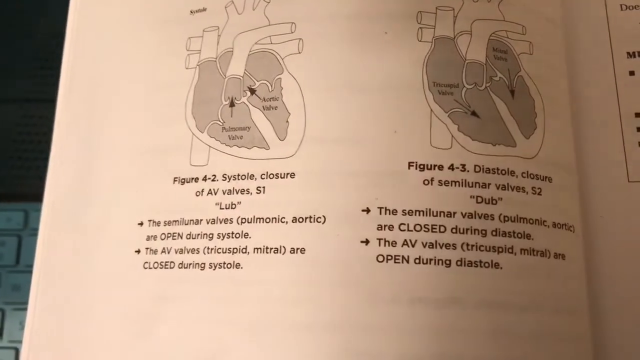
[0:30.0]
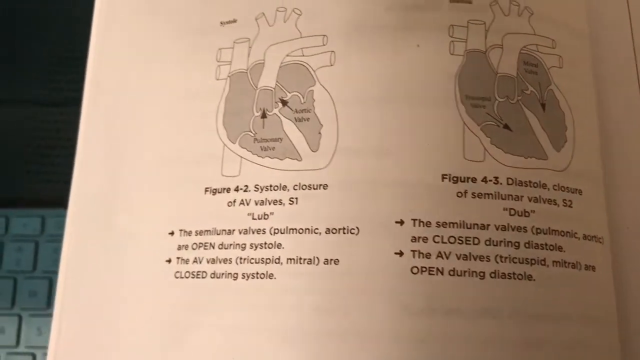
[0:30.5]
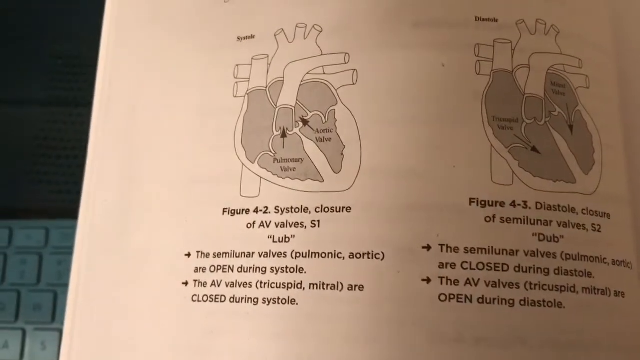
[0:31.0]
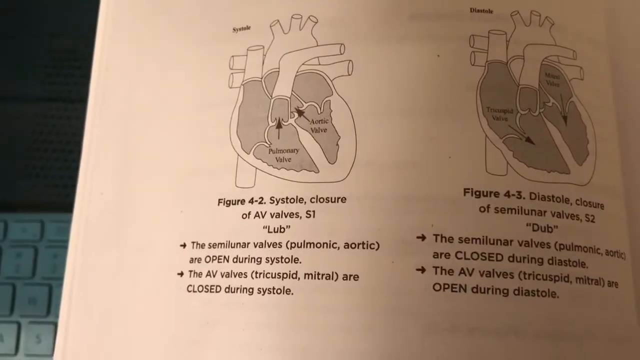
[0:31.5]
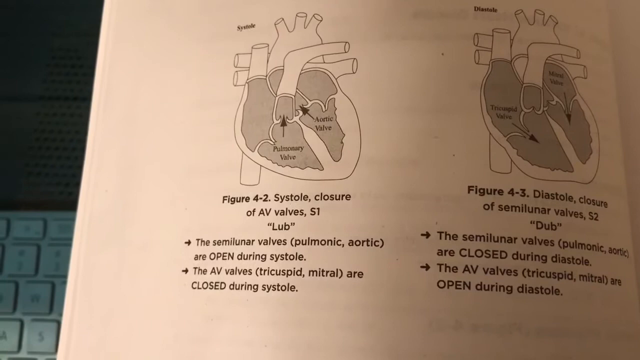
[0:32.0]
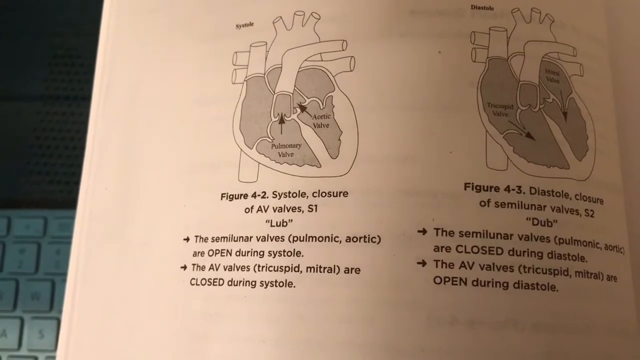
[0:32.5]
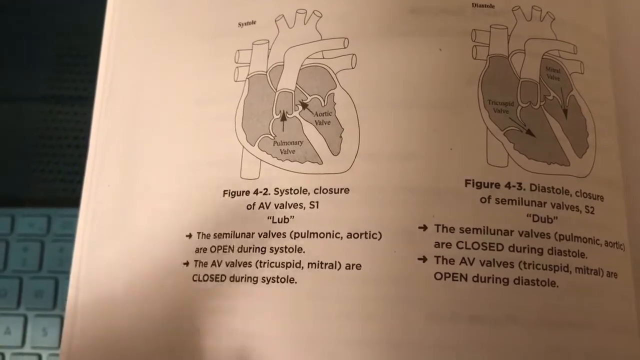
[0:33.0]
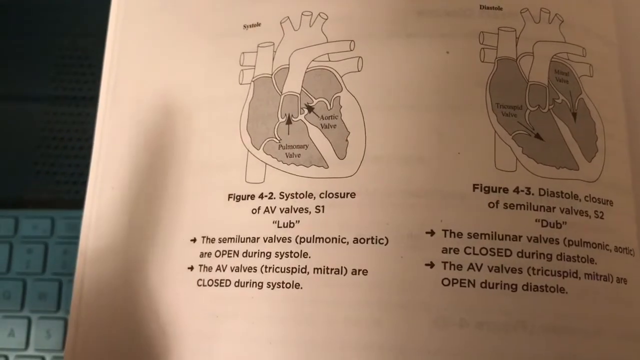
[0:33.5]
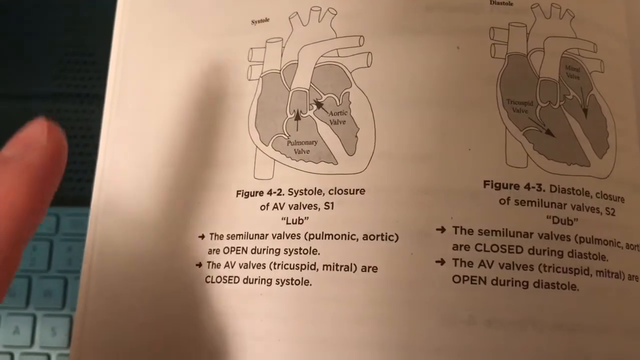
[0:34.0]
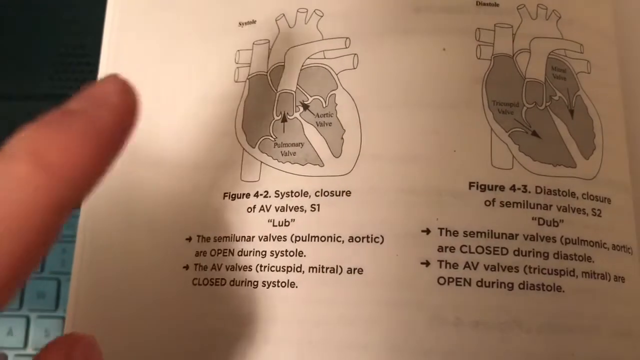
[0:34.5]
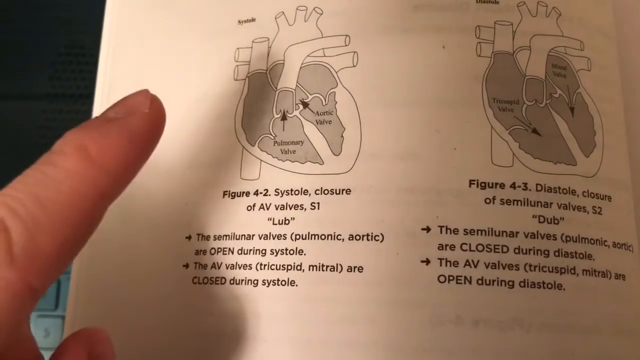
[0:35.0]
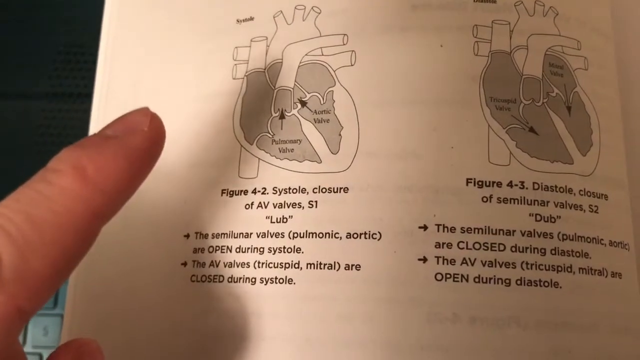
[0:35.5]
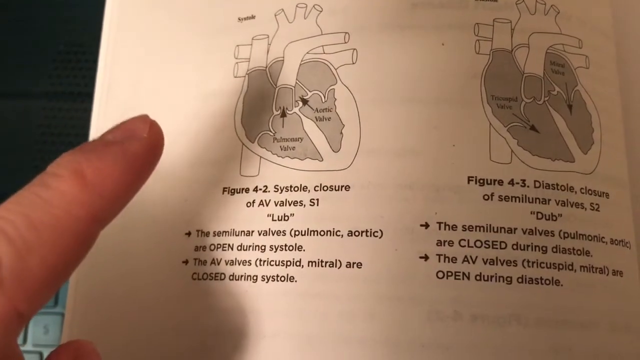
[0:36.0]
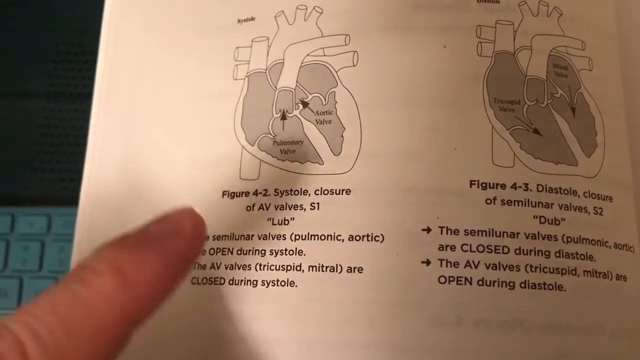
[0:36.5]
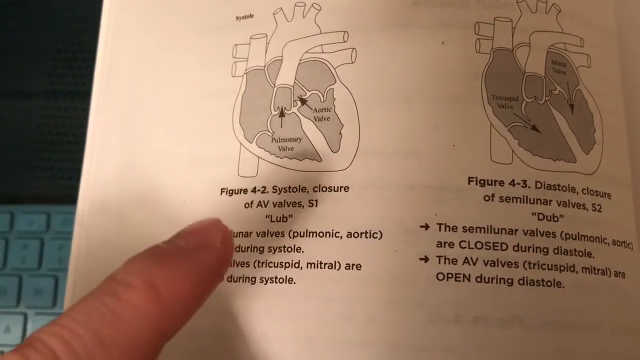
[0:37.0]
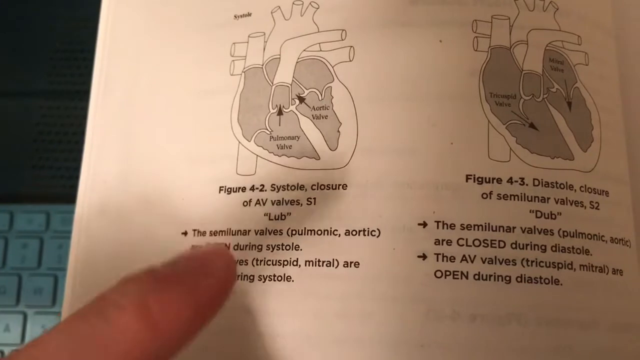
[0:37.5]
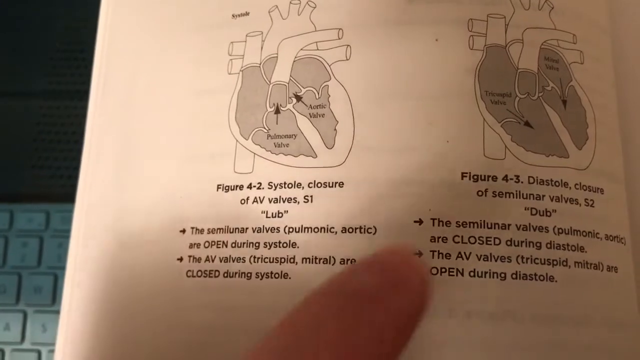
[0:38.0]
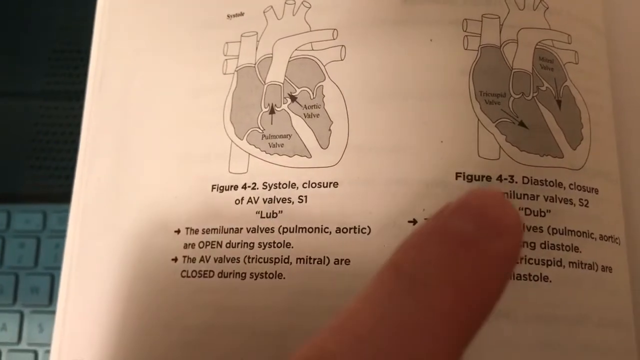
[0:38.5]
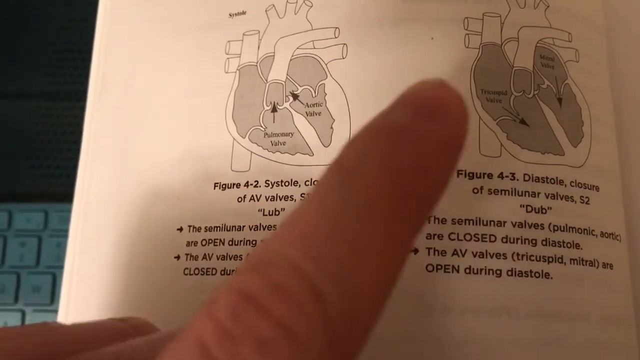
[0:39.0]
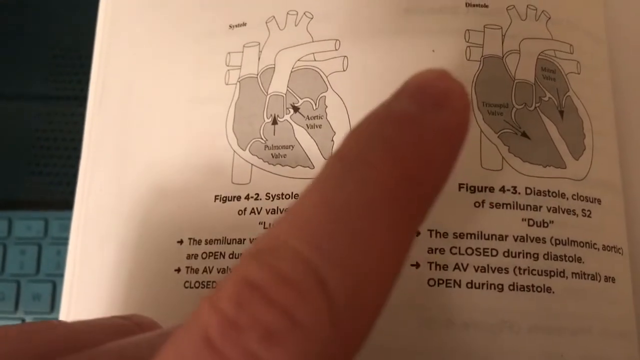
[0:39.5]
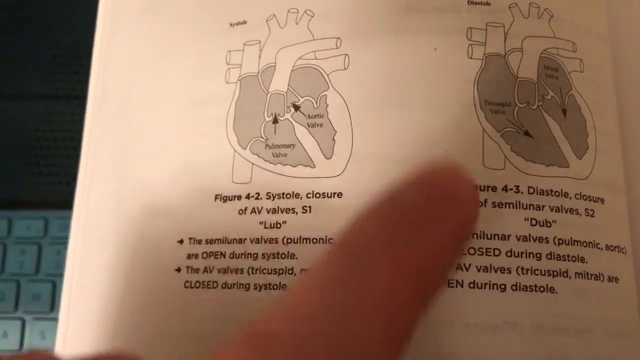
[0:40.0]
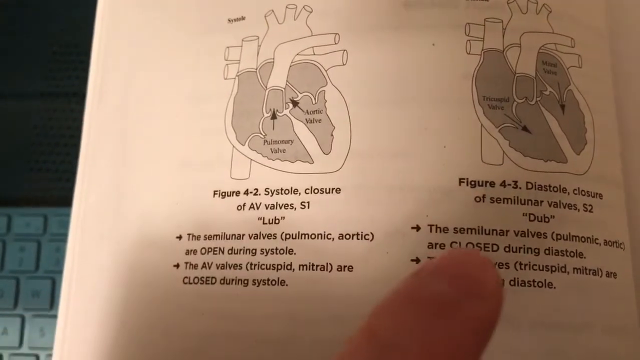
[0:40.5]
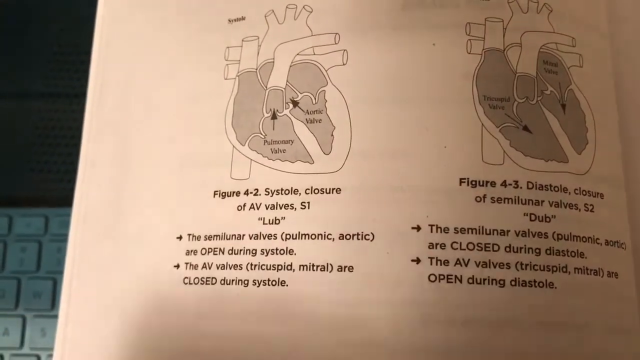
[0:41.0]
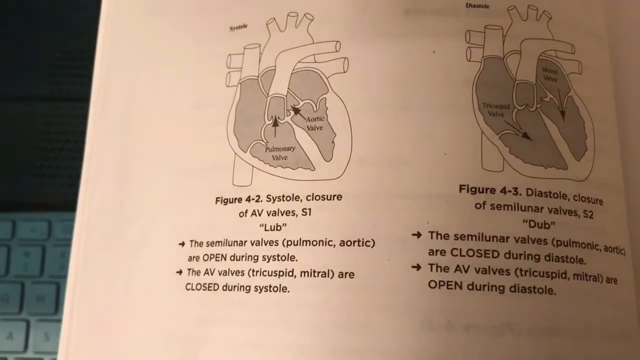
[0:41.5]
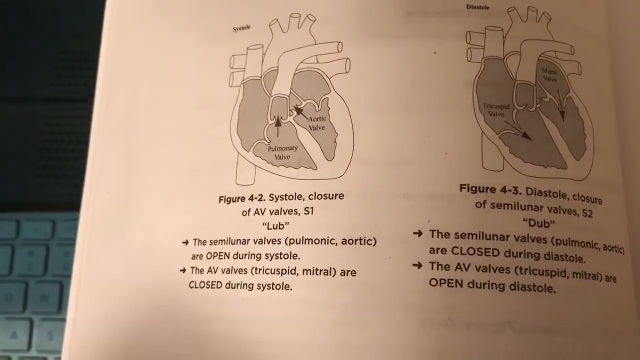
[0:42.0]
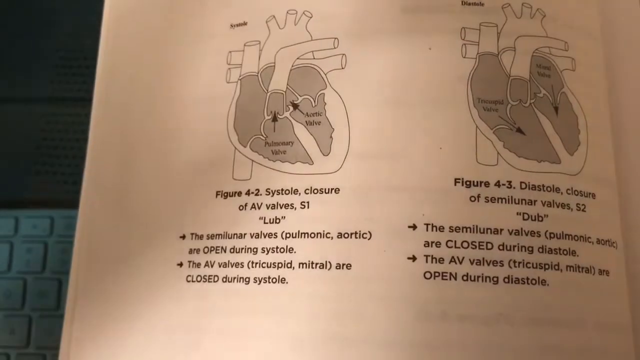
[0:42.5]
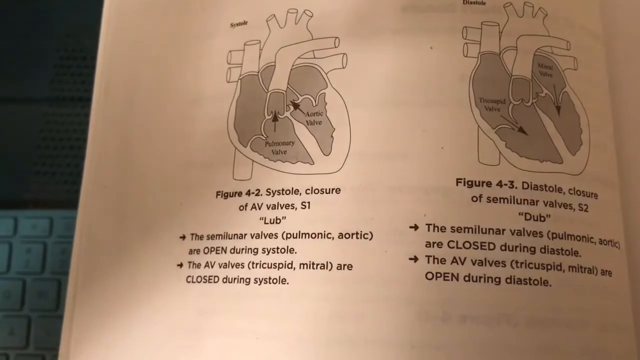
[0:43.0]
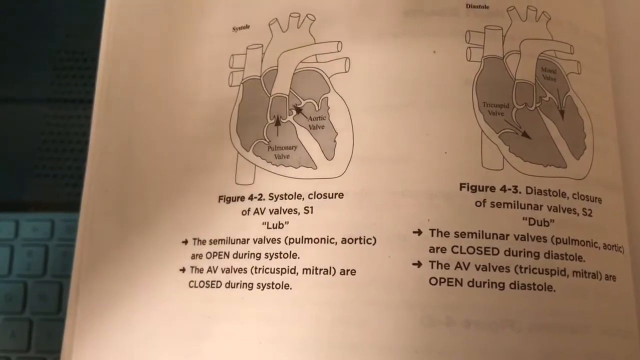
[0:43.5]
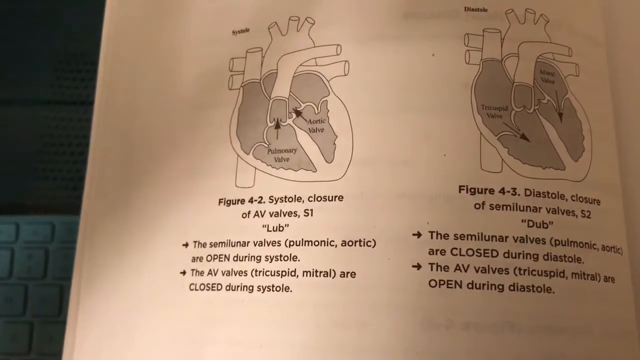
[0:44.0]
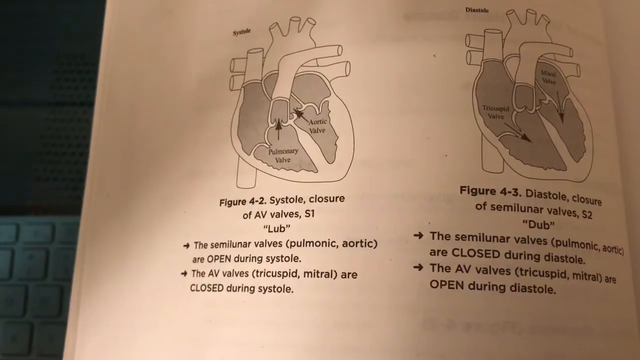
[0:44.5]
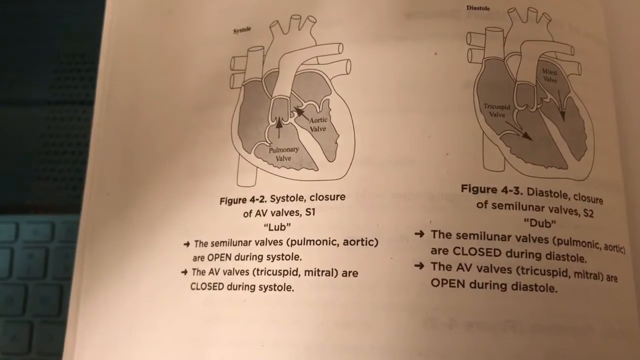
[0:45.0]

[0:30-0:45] The open medical book is on the surface of a laptop, open at a page showing cross-sections of the heart and the different valves. The diagram on the left-hand side of the page shows systole and is labelled "figure 4.2, systole, closure of AV valves, S1, lub. The semilunar valves, pulmonic, aortic are open during systole. The AV valves, tricuspid, mitral are closed during systole." The diagram on the right-hand side shows diastole: "figure 4.3 diastole closure of semilunar valves, S2, dub. The semilunar valves, pulmonic, aortic are closed during diastole. The AV valves, tricuspid, mitral are open during diastole." The pulmonary valve and the aortic valve are marked with arrows on both diagrams. Someone's finger appears on the left-hand side of the screen and points to the left-hand diagram and to the right-hand diagram.